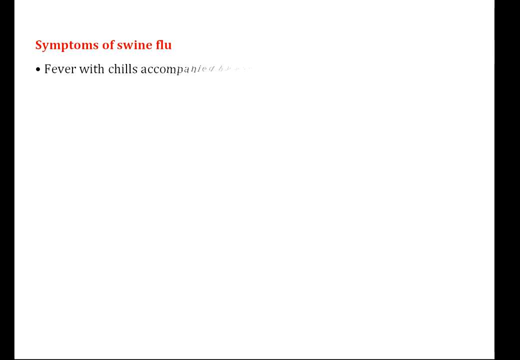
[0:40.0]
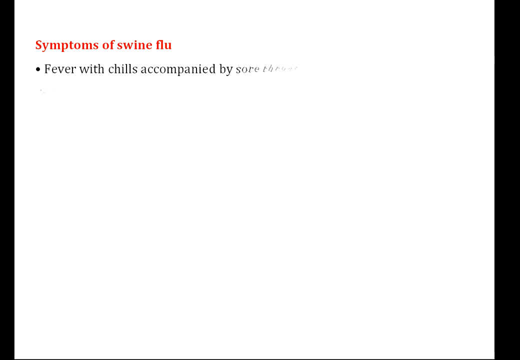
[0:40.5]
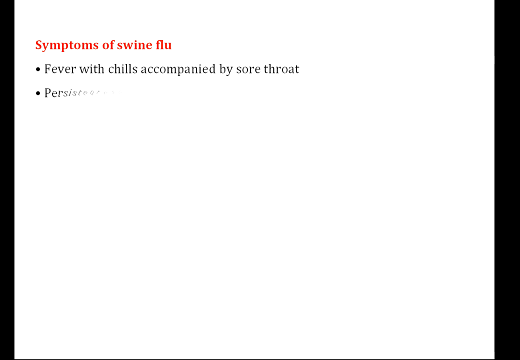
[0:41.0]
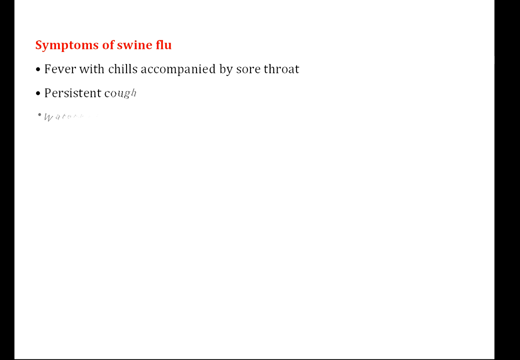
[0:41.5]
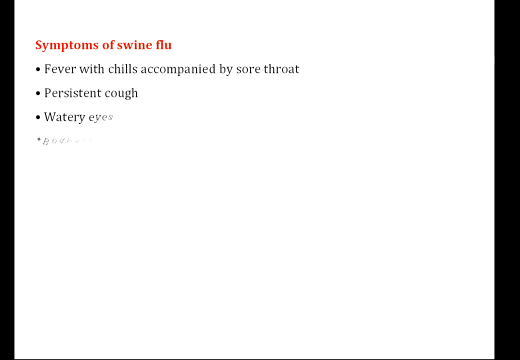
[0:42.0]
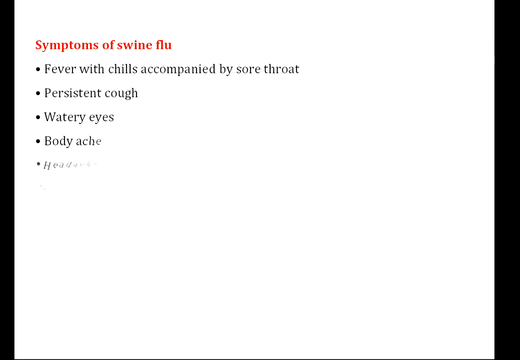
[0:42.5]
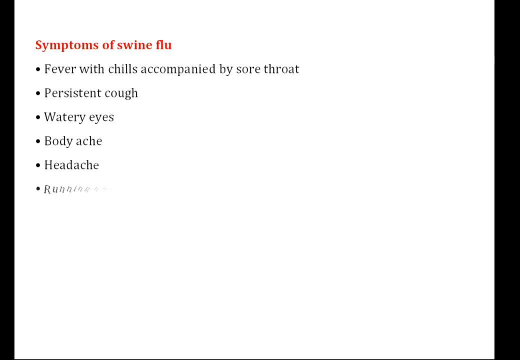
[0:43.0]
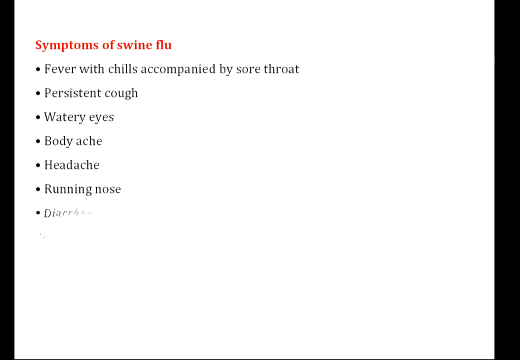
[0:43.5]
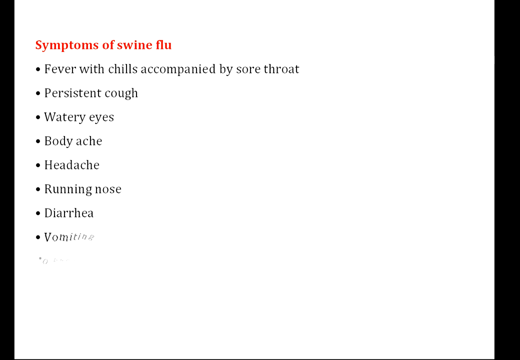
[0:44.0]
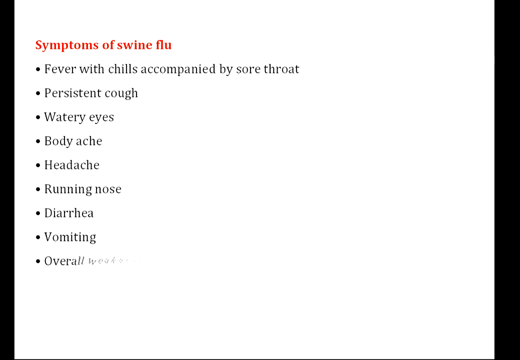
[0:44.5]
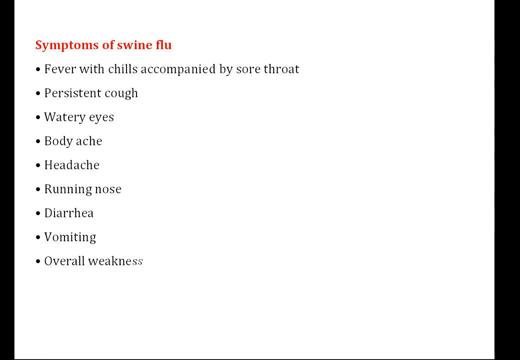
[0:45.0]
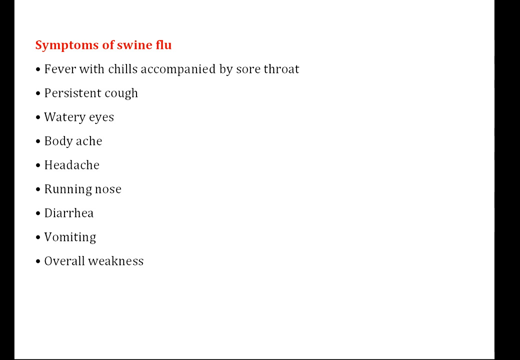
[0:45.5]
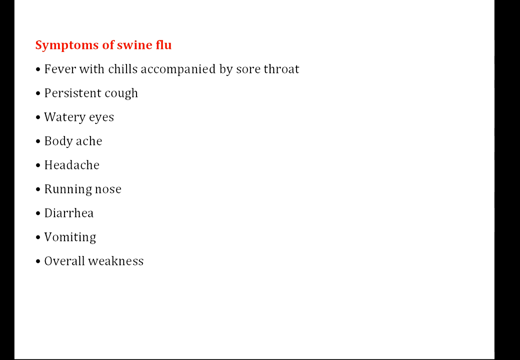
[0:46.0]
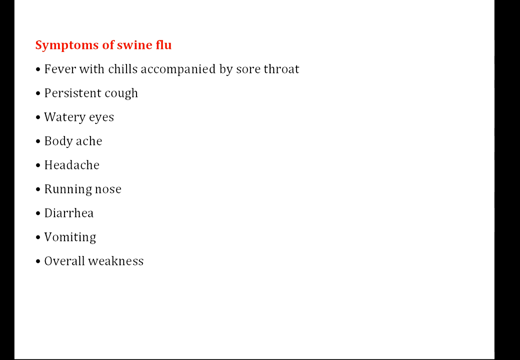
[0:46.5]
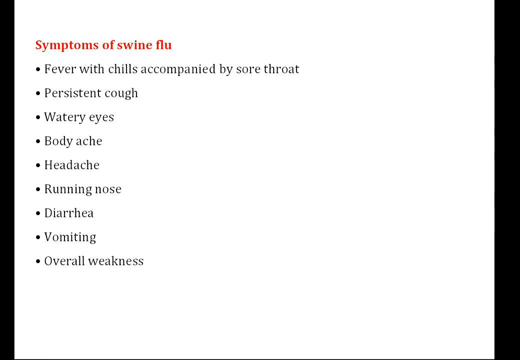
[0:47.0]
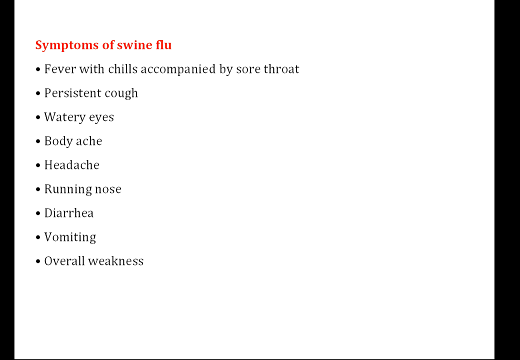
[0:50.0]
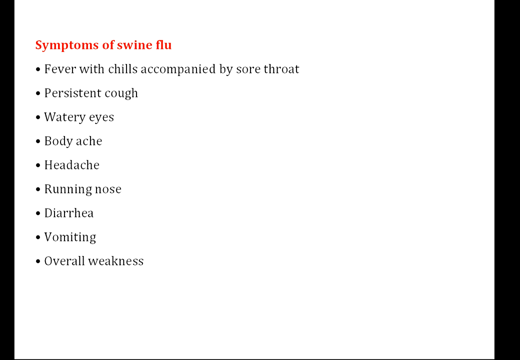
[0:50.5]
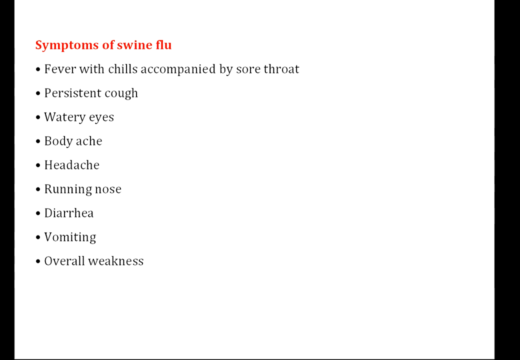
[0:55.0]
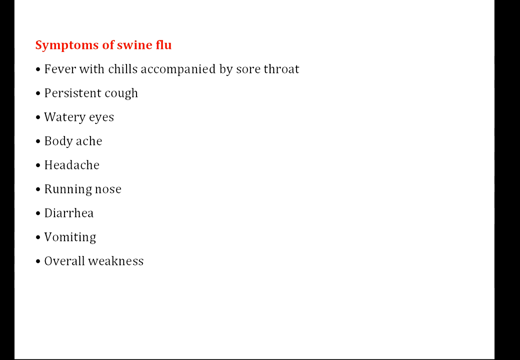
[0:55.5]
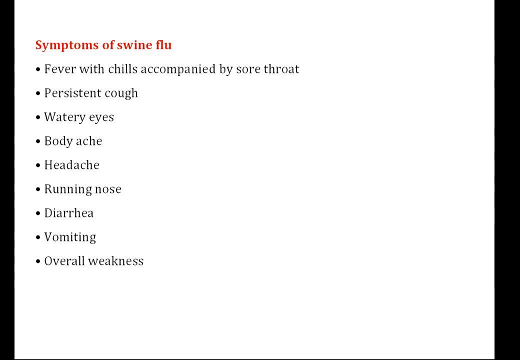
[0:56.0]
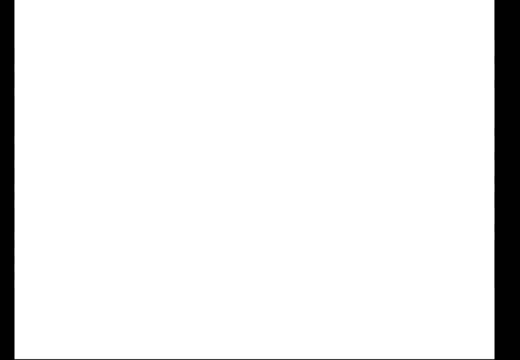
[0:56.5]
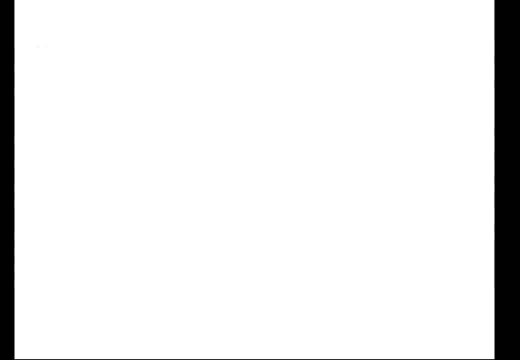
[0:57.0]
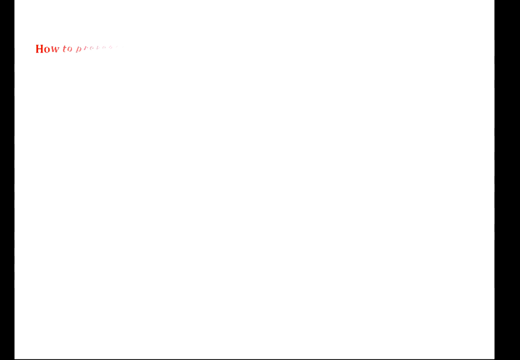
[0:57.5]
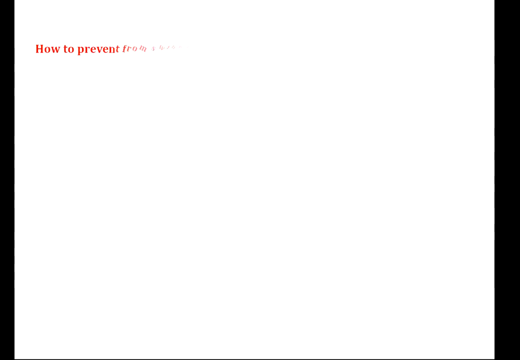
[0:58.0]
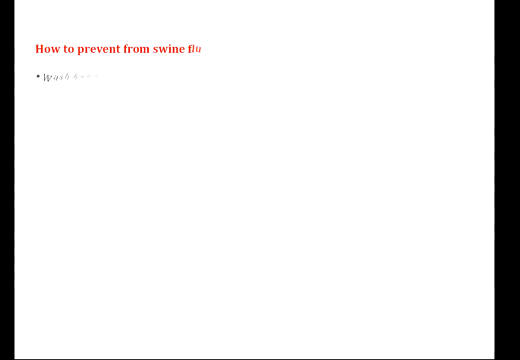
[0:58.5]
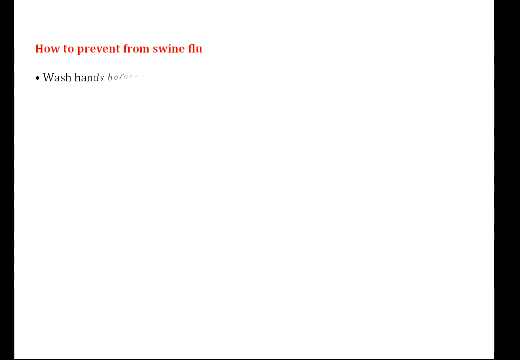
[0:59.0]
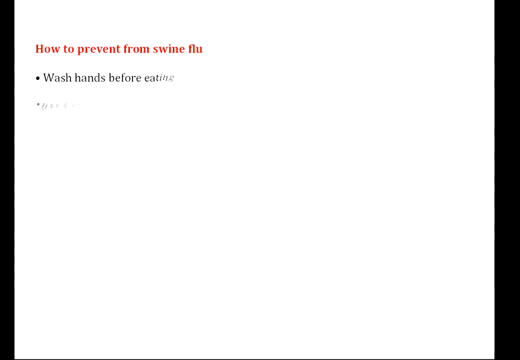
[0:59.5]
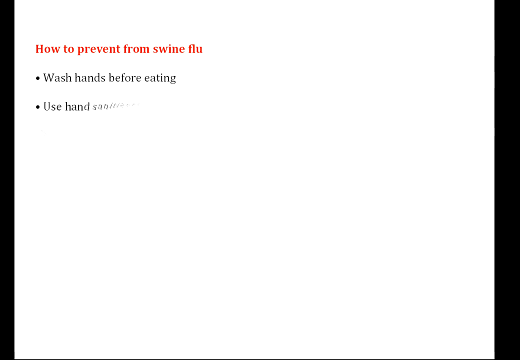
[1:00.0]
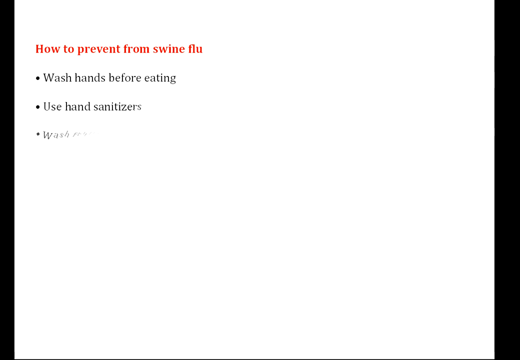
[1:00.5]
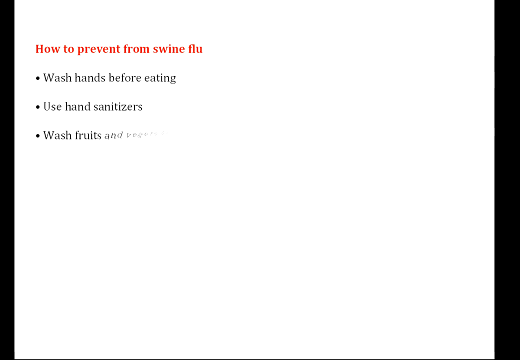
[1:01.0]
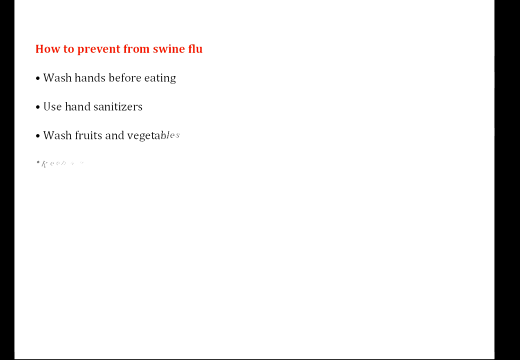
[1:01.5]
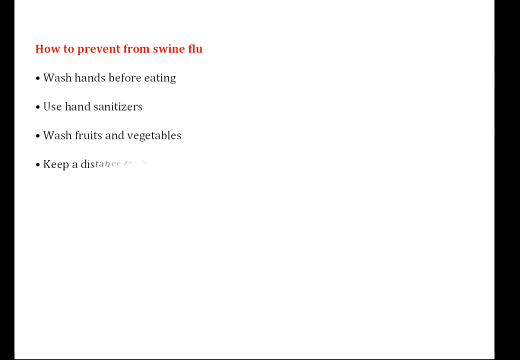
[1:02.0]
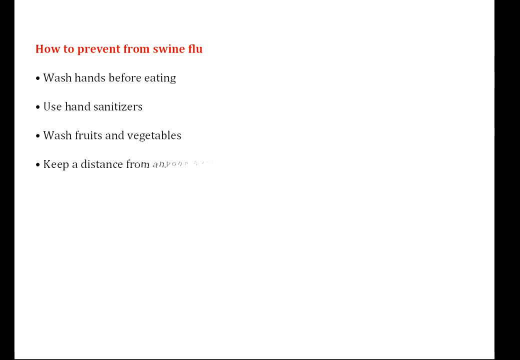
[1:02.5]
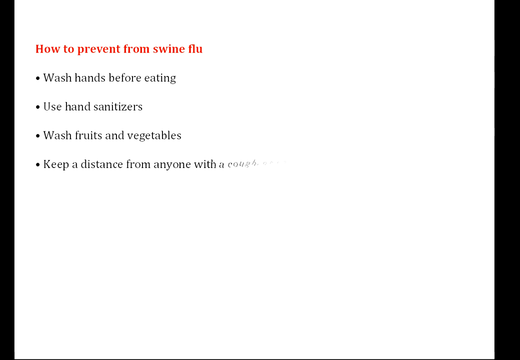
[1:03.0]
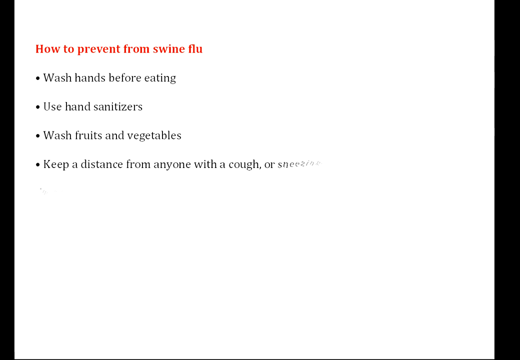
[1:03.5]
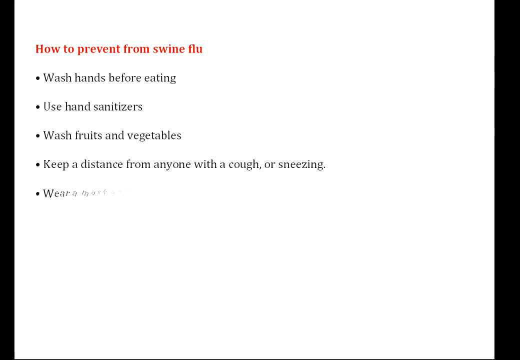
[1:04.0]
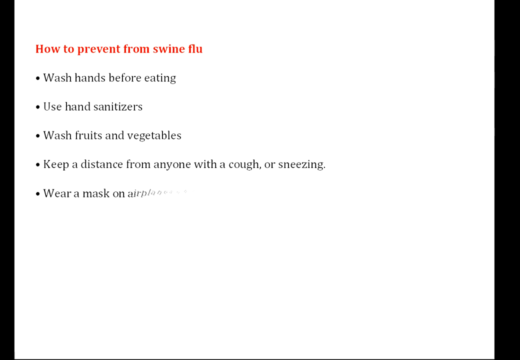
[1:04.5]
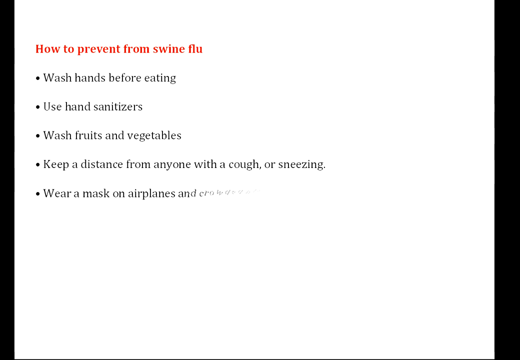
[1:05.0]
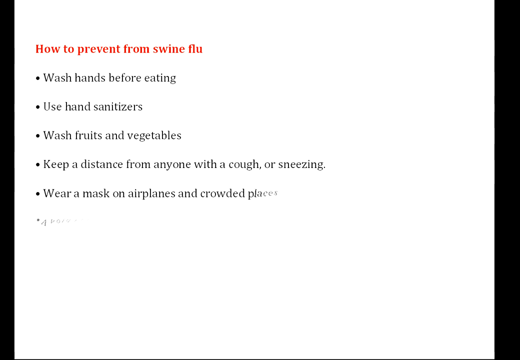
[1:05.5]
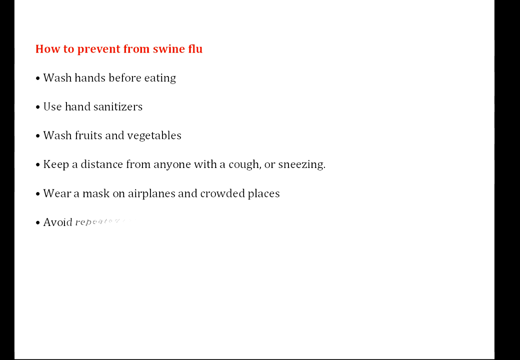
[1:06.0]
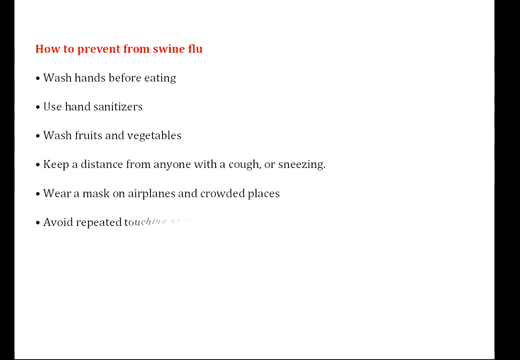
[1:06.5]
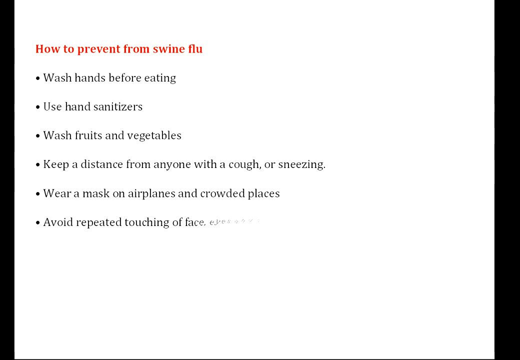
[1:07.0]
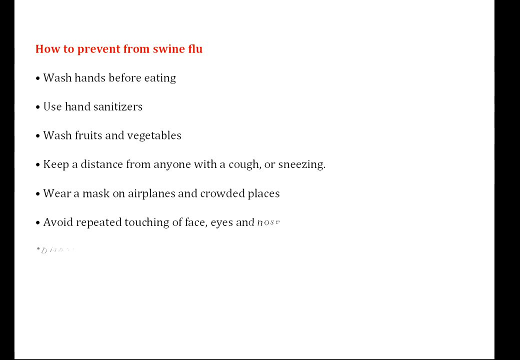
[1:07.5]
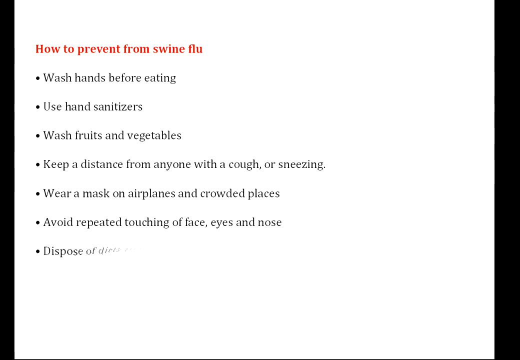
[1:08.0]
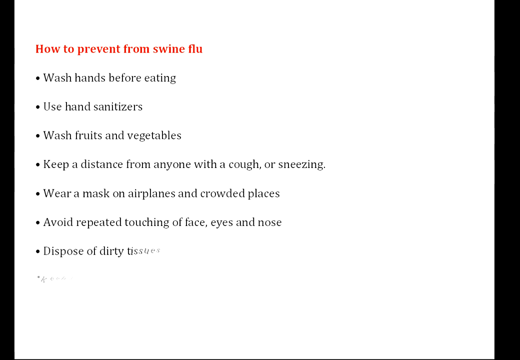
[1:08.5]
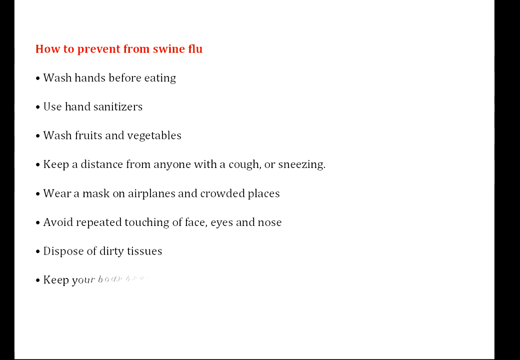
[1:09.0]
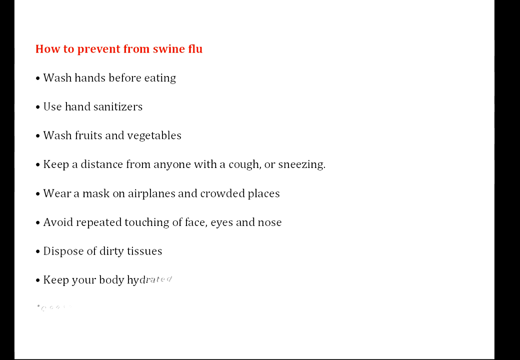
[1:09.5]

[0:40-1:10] Text lists the symptoms of swine flu. A red header at the top of the screen reads "Symptoms of swine flu," and the symptoms are listed below it with bullet points: fever with chills accompanied by sore throat, persistent cough, watery eyes, body ache, headache, running nose, diarrhea, vomiting, overall weakness. The screen then fades, and a new screen appears with a red header reading "How to Prevent from Swine Flu." Below it, bullet points list ways to prevent the disease: wash hands before eating, use hand sanitizers, wash fruits and vegetables, keep a distance from anyone with a cough or sneezing, wear a mask on airplanes and crowded places, avoid repeated touching of face, eyes, and nose, dispose of dirty tissues, keep your body hydrated. A final line is being added as the shot ends.